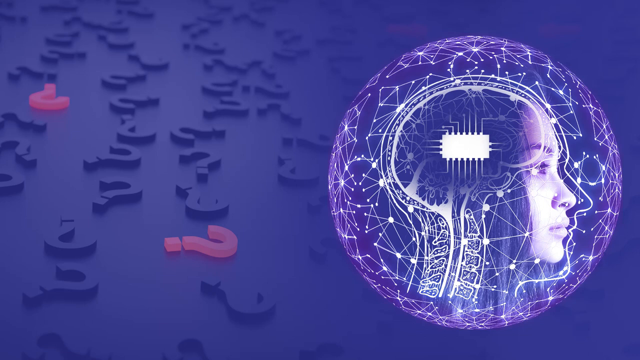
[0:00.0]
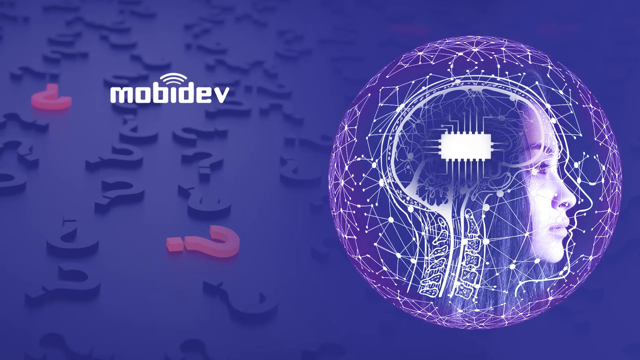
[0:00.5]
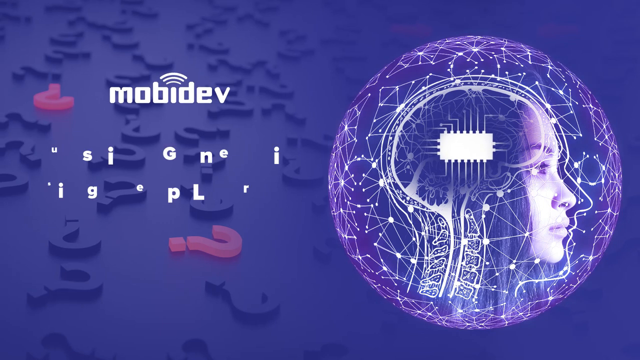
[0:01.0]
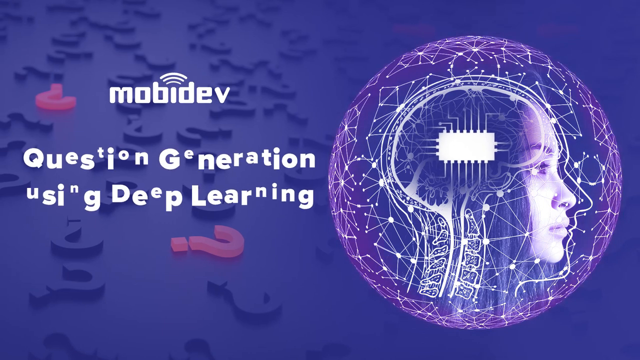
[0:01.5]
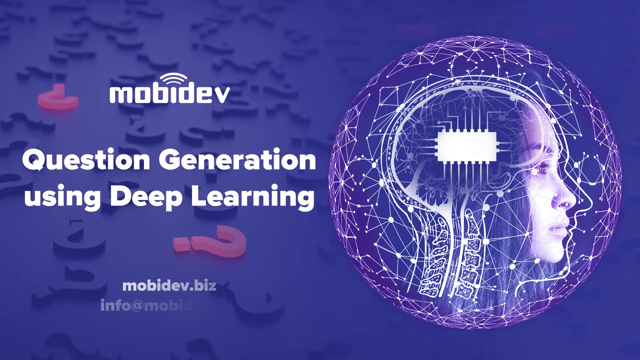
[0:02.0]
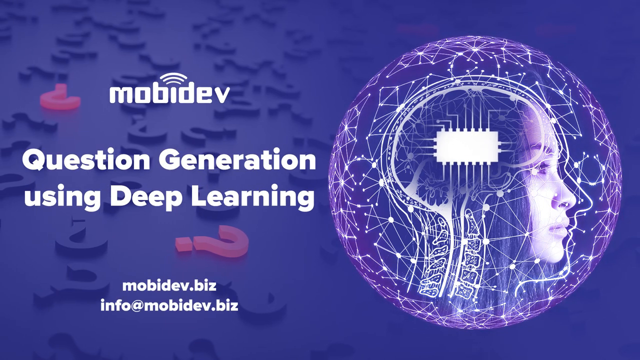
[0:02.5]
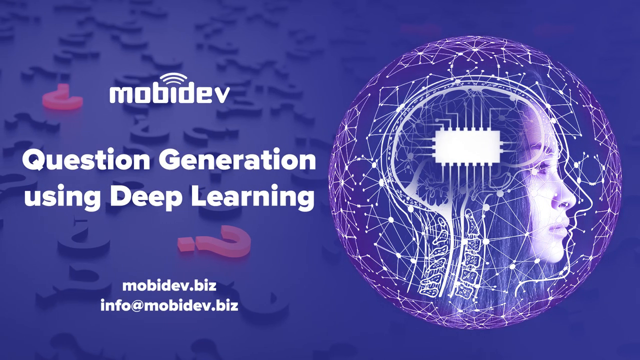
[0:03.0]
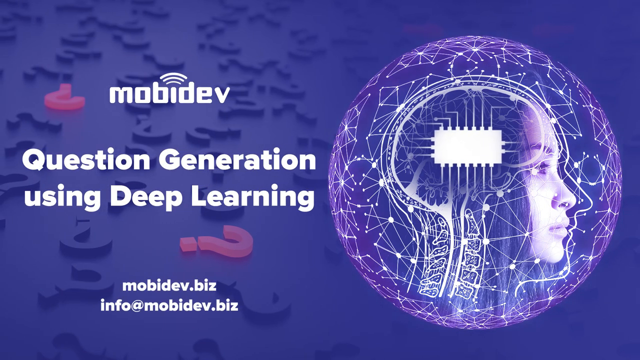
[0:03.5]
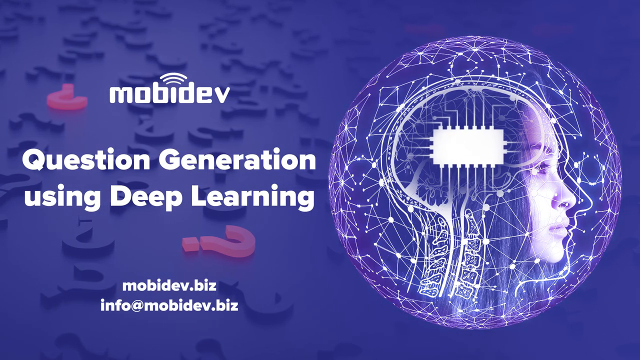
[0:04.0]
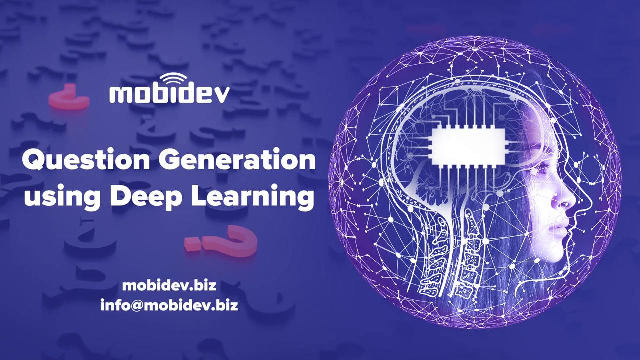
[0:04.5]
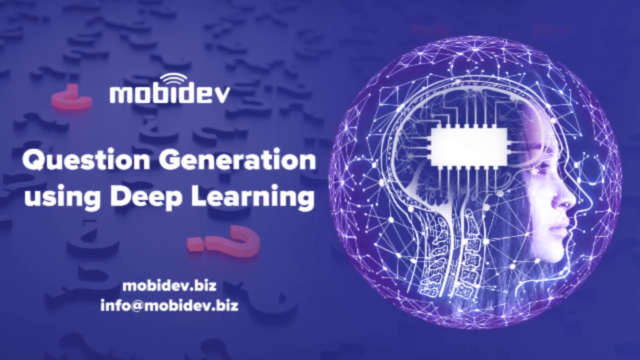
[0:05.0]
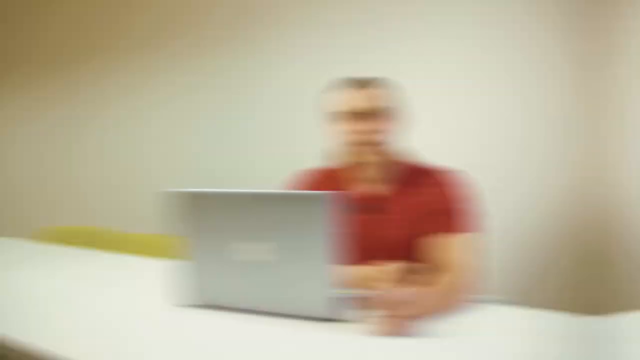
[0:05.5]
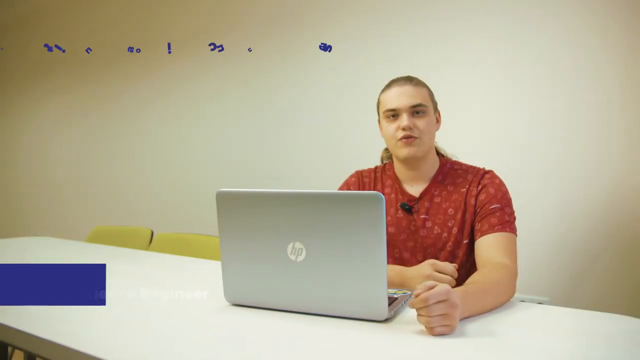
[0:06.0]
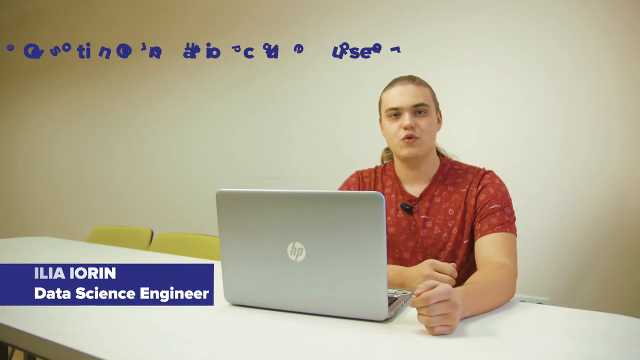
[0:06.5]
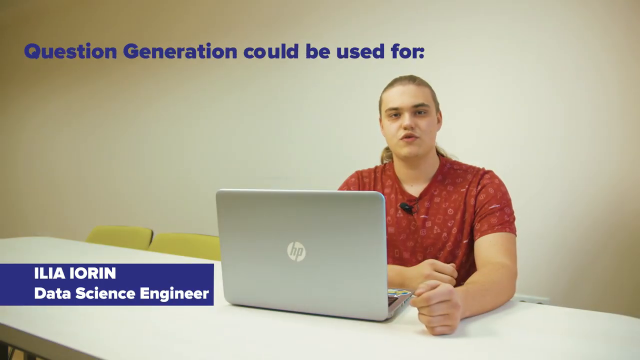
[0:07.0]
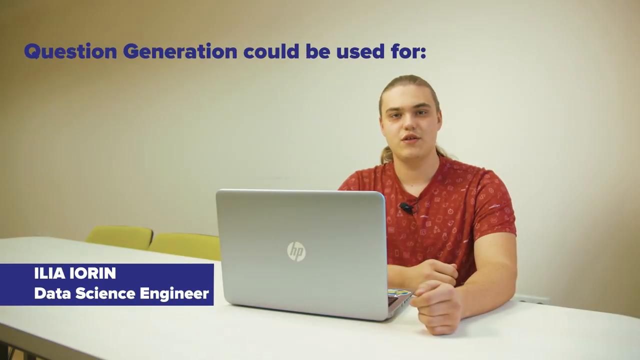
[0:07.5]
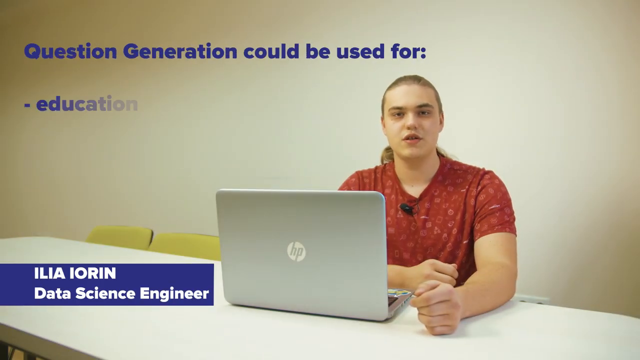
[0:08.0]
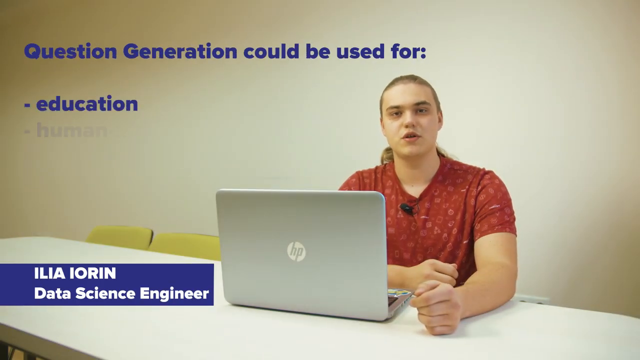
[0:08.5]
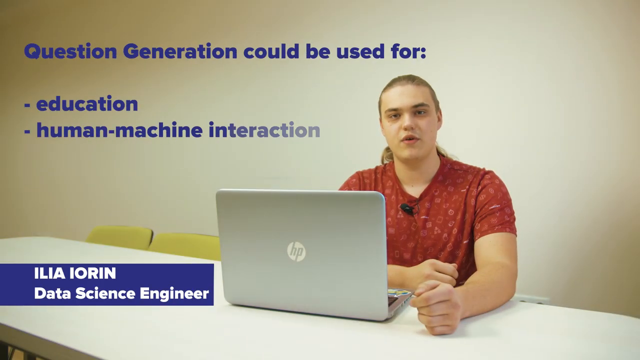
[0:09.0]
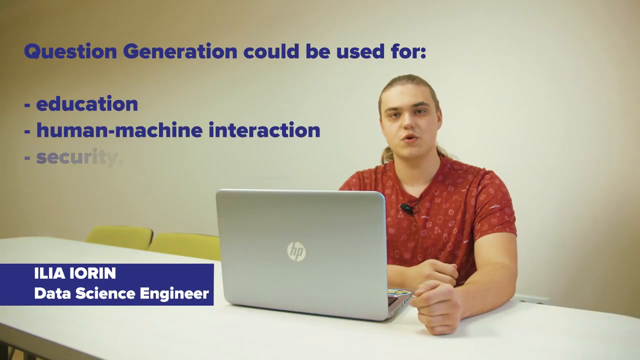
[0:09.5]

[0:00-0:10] A blue screen full of question marks fills the background, with the picture of a human face in the right corner. The face divides into a familiar human face and a brain made of a chip, a CPU of the kind found in electronics, with connections running around the brain area. A spine runs downwards, and the chip replaces the brain in some capacity. A site, mobidev.biz, is then presented. The video cuts from this blue background to another person, probably an employee, who is a data science engineer.